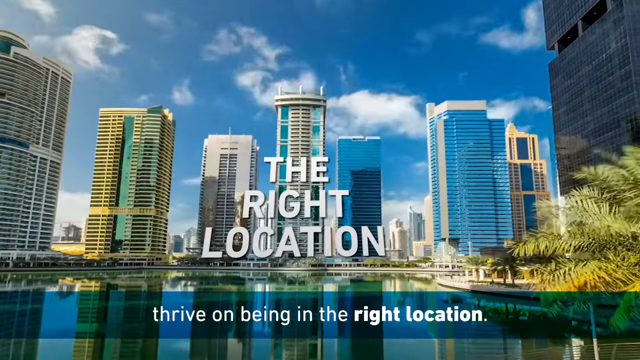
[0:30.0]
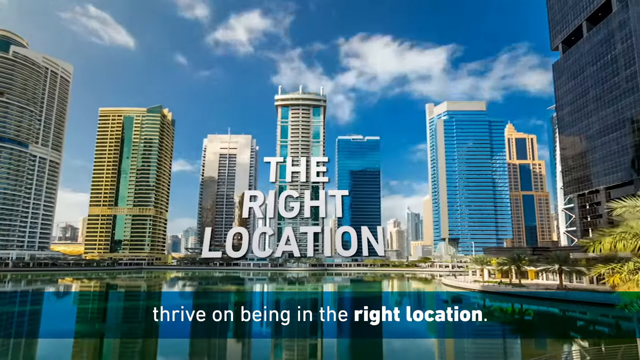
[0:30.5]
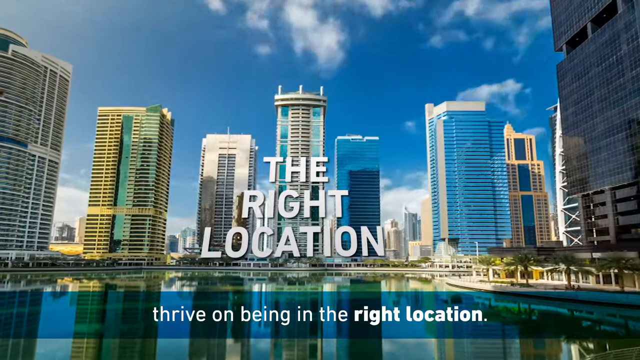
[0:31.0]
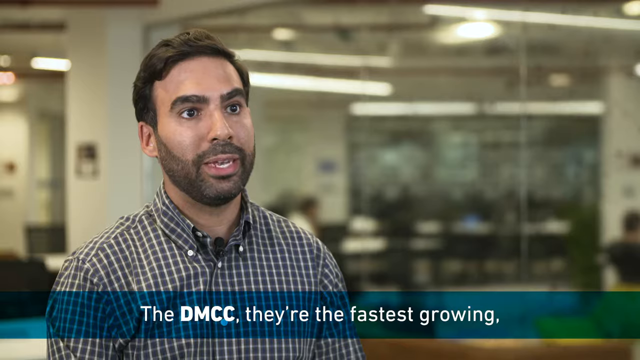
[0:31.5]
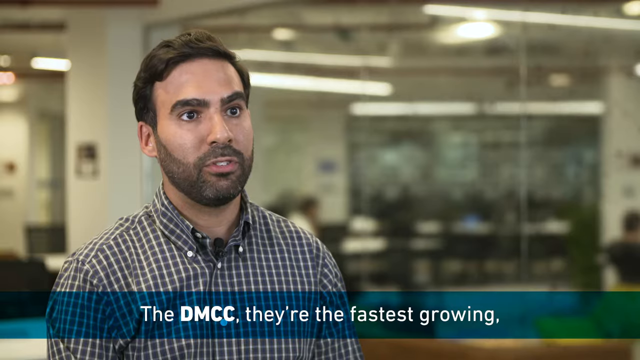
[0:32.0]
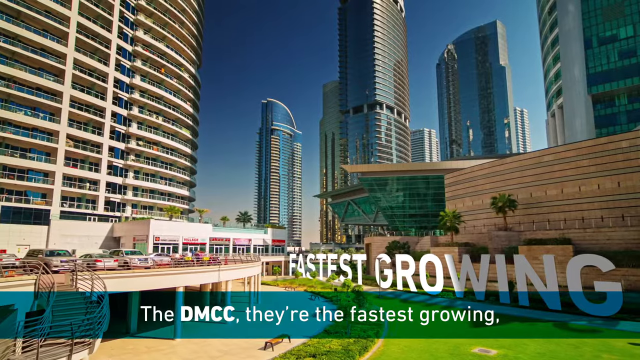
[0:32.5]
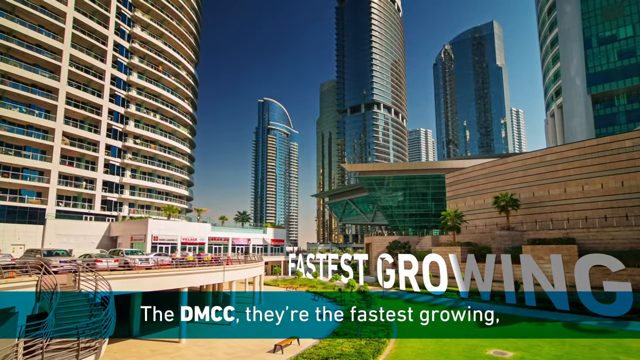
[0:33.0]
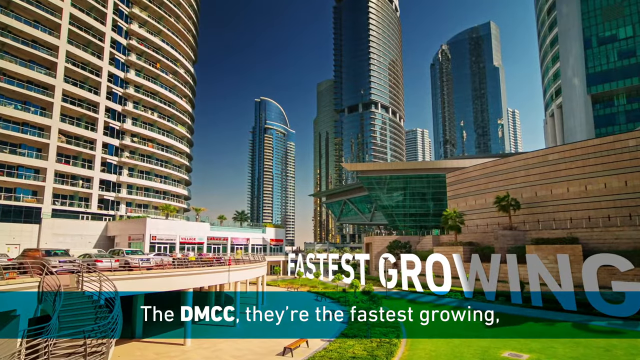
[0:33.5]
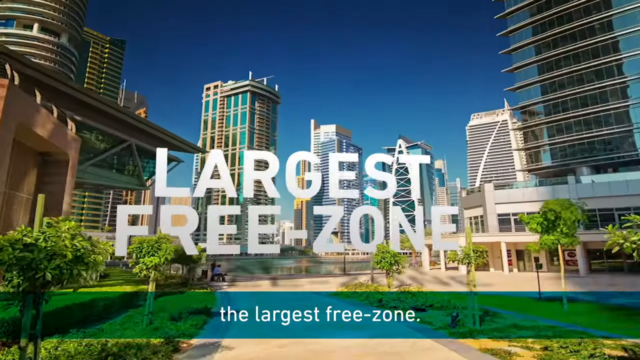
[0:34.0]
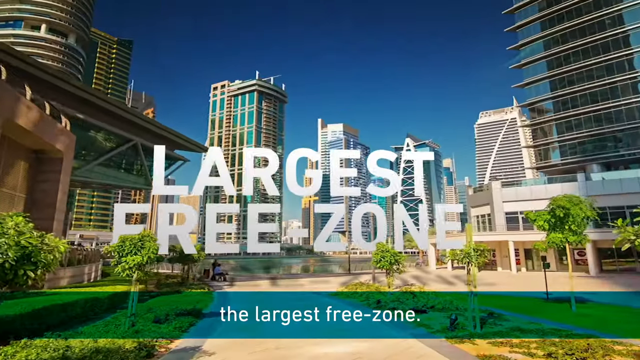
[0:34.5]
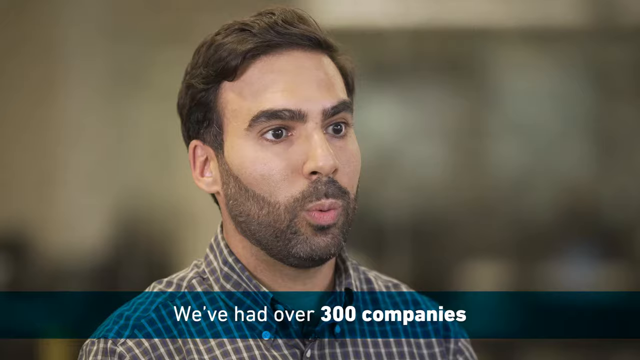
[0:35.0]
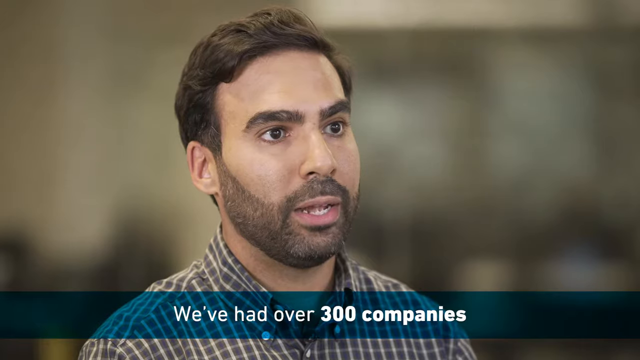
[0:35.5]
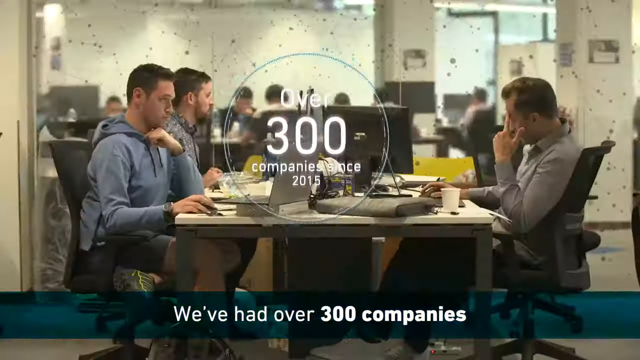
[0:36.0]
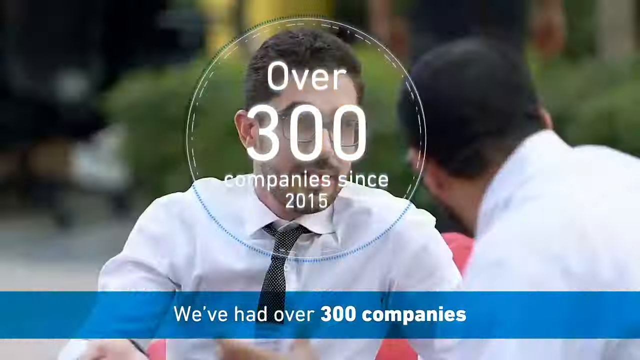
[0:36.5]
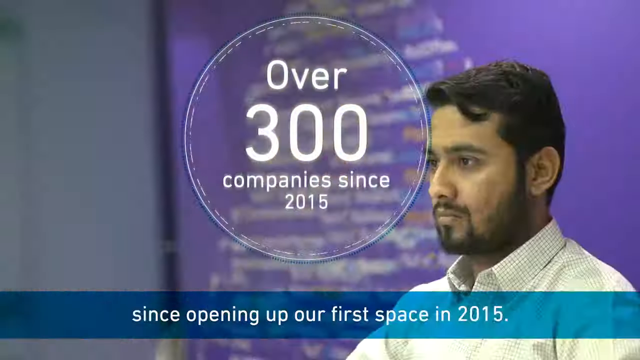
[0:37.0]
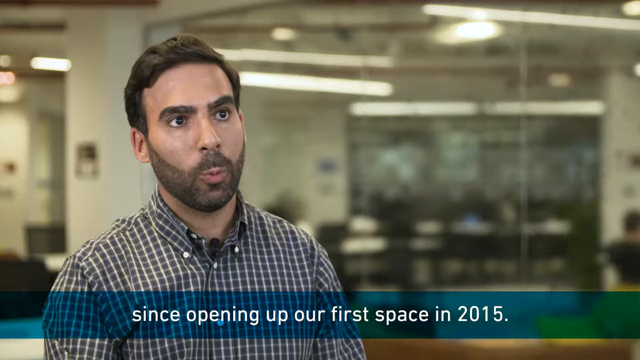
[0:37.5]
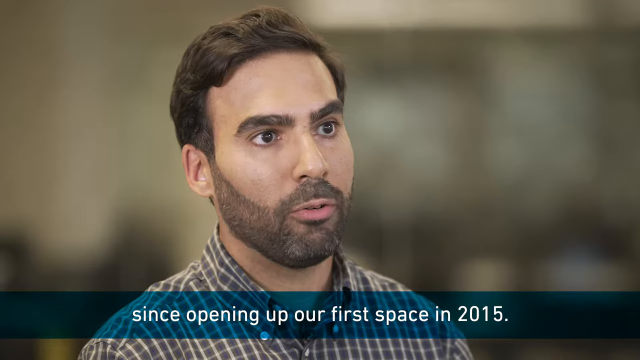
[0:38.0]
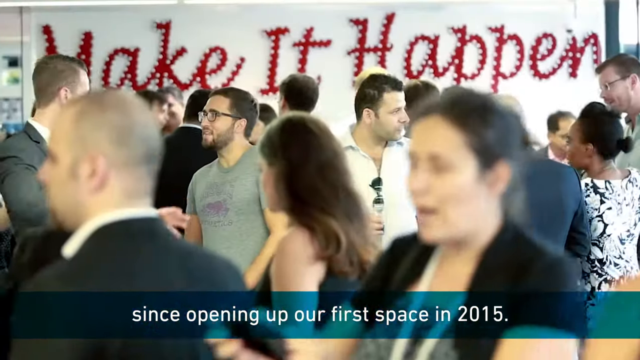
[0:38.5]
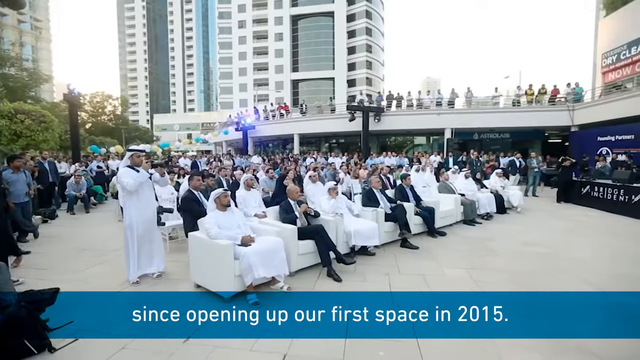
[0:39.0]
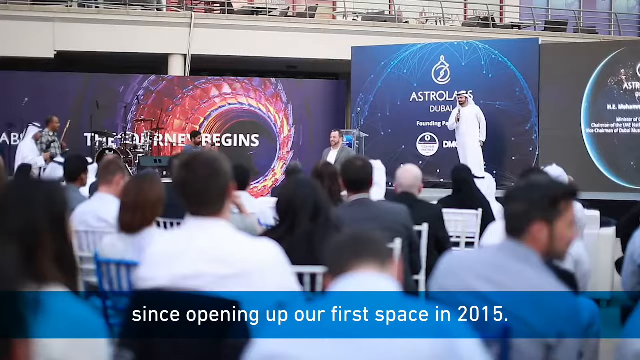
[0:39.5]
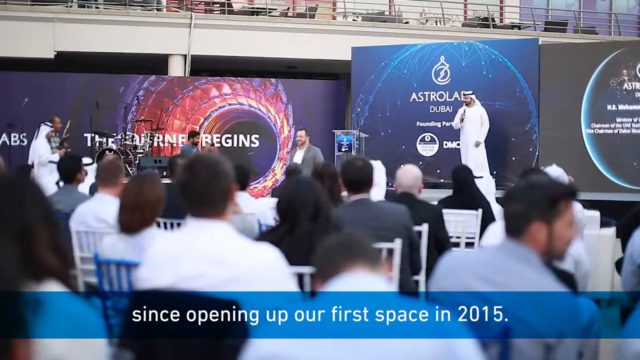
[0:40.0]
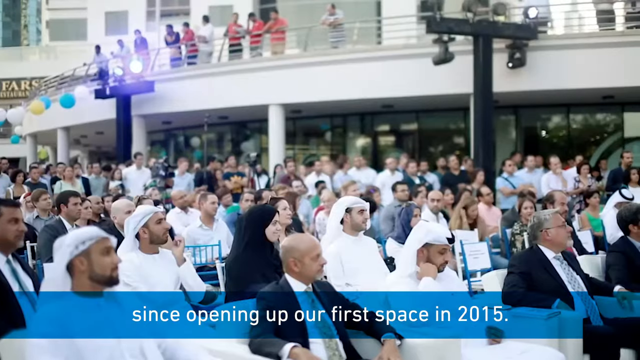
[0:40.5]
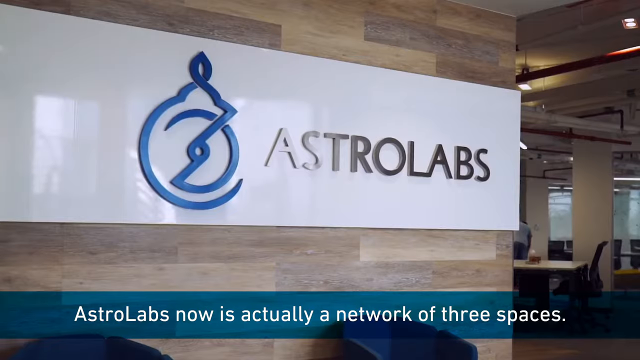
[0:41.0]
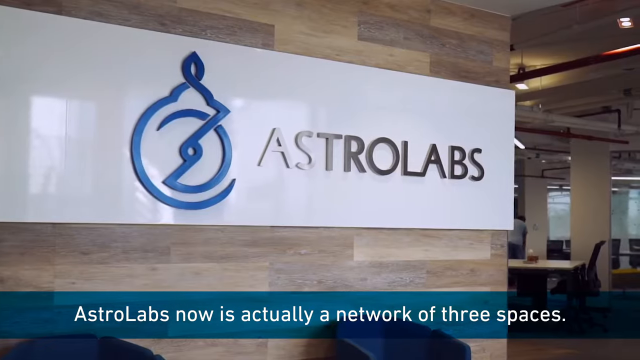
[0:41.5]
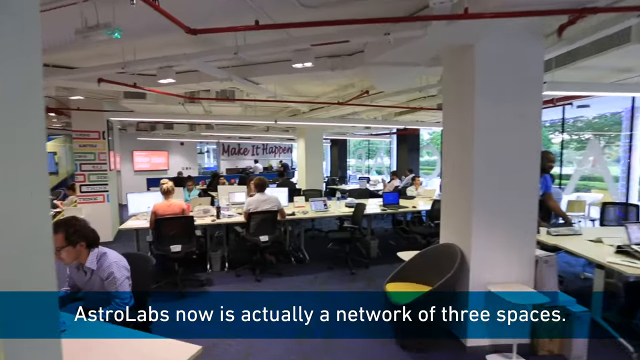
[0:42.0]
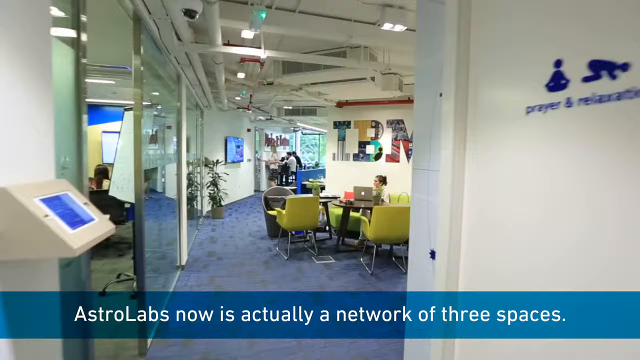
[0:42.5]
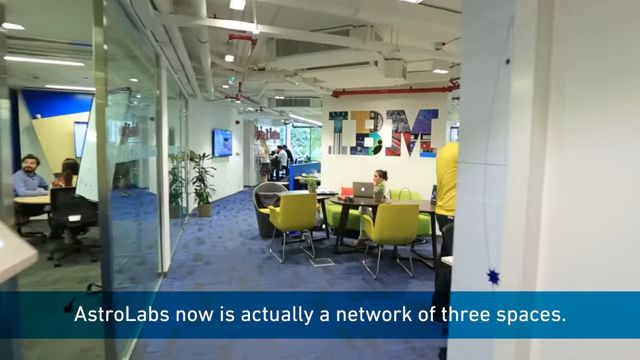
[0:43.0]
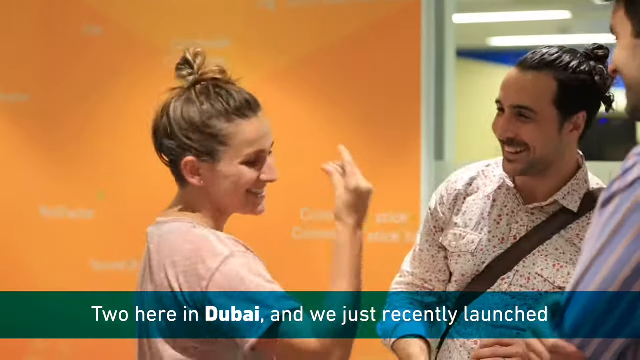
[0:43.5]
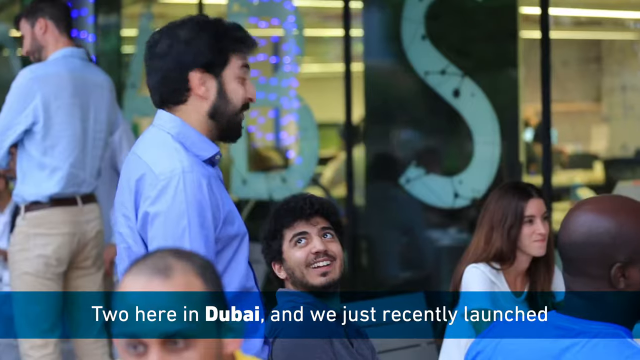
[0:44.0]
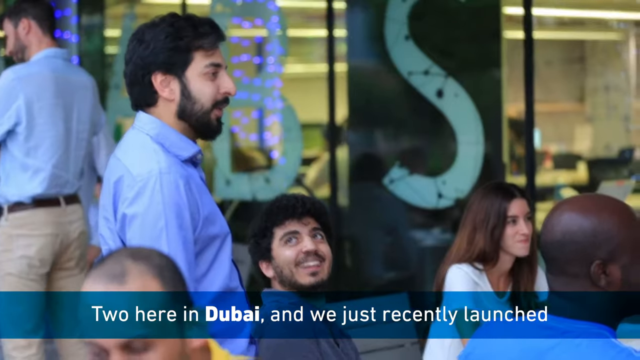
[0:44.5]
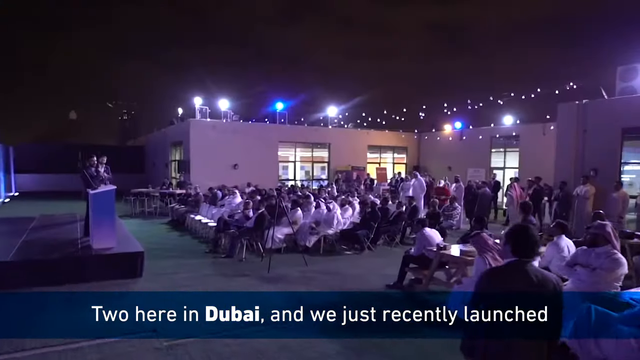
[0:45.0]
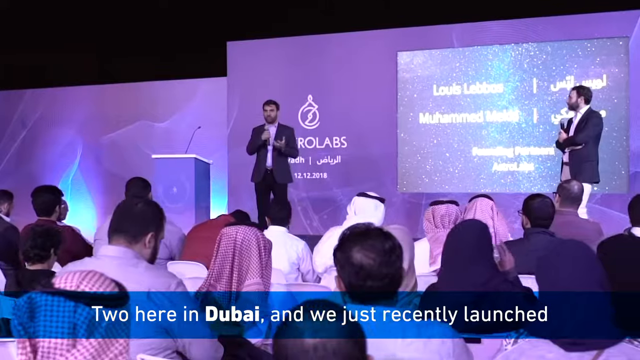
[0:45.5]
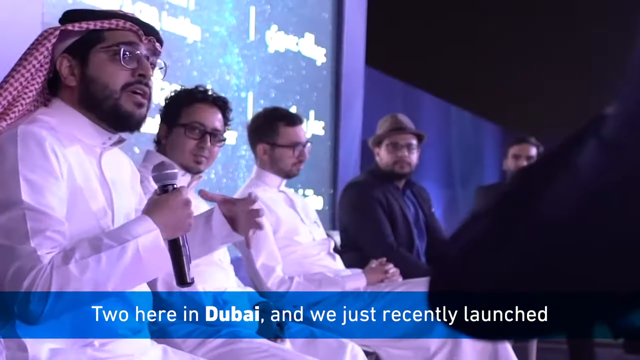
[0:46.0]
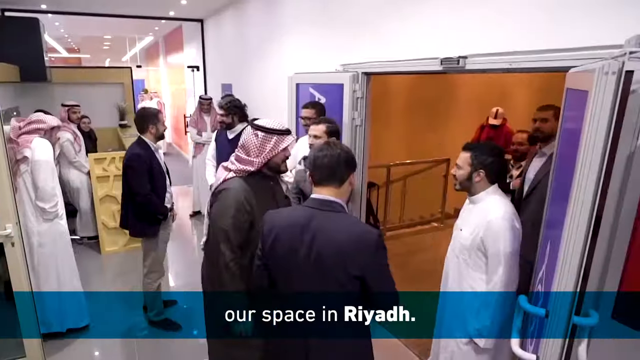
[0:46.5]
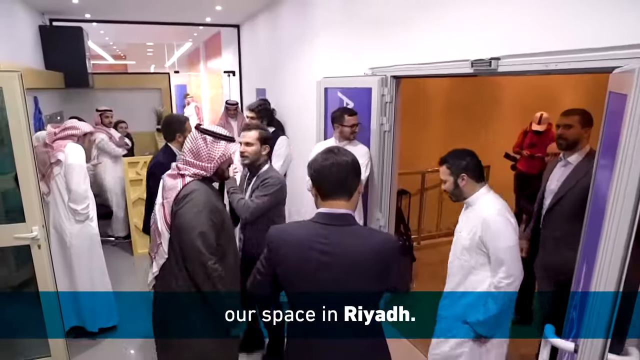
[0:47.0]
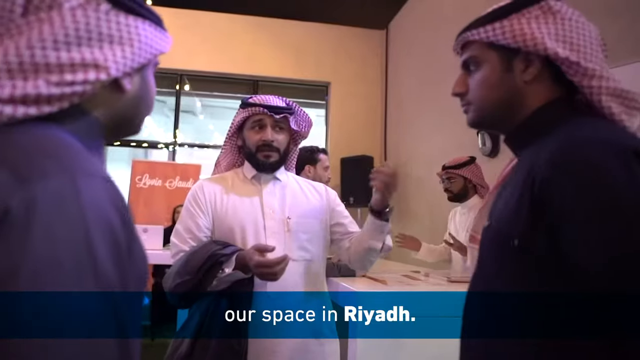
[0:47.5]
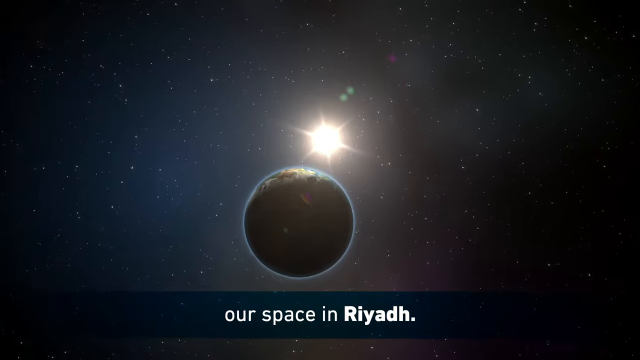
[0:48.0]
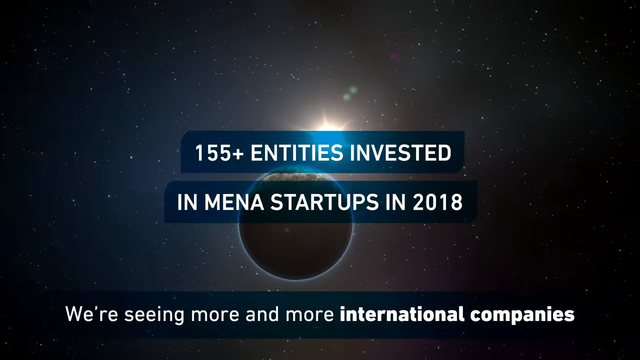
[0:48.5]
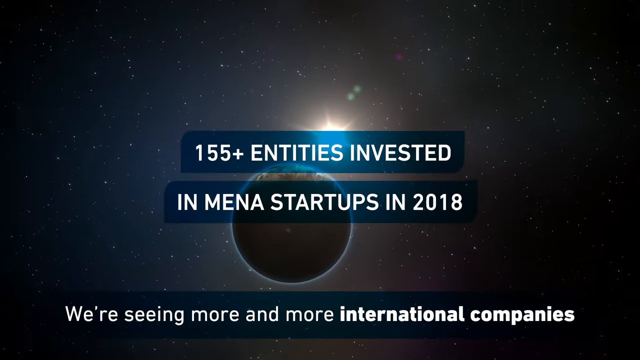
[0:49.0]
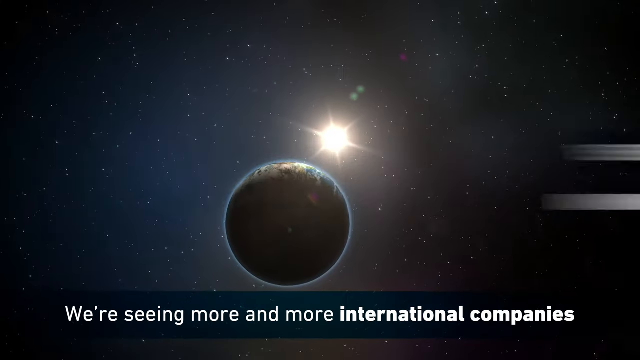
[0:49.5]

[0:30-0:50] The speaker refers to the DMCC: "they're the fastest growing, the largest free zone. We've had over 300 companies since 2015, since opening up our first space." Speaking on behalf of AstroLabs, he says it is now a network of three spaces, two of them in Dubai, and that they recently launched a space in Riyadh, adding, "We're seeing more and more international companies." Then "155 plus entities invested in MENA startups in 2018" and "47% invested for the first time" are shown.